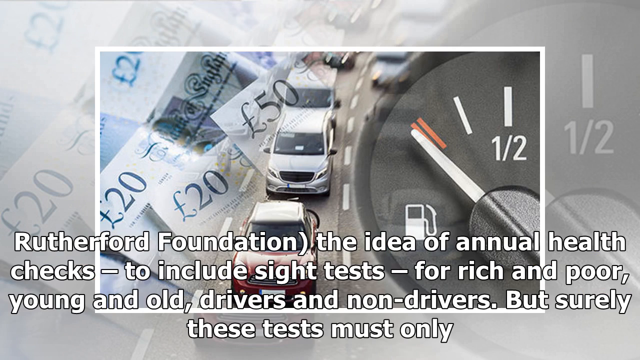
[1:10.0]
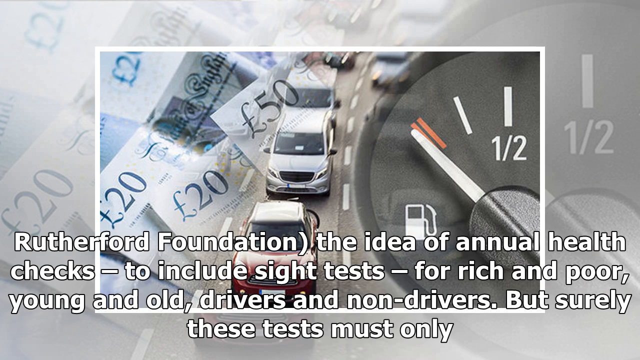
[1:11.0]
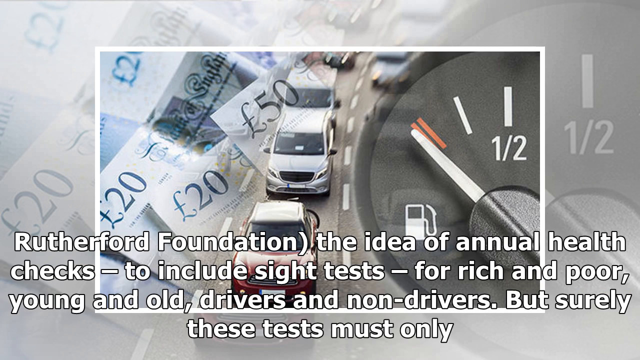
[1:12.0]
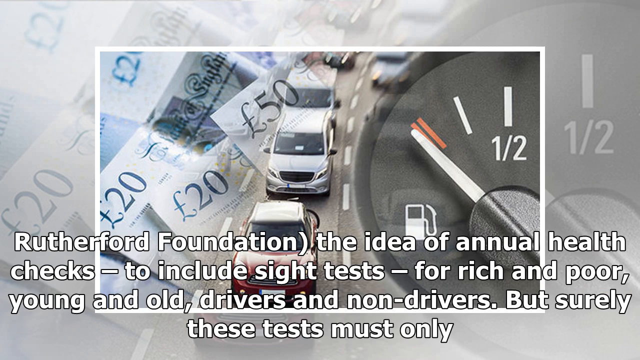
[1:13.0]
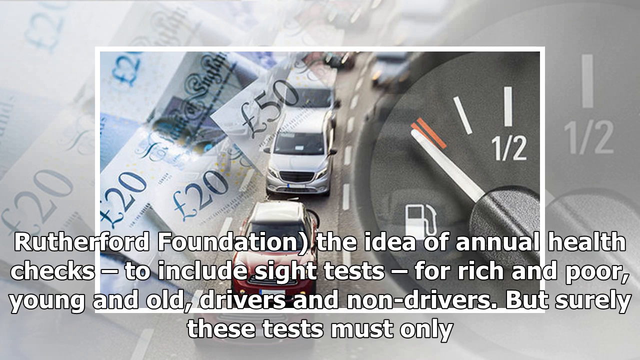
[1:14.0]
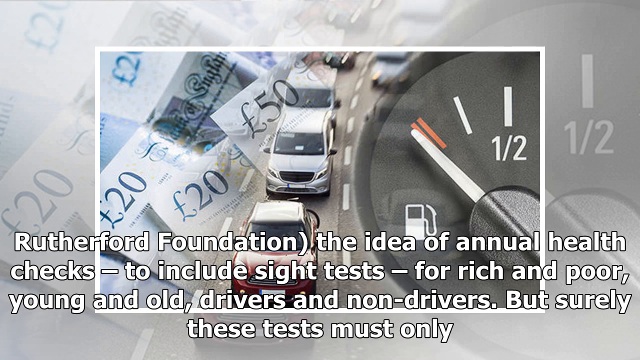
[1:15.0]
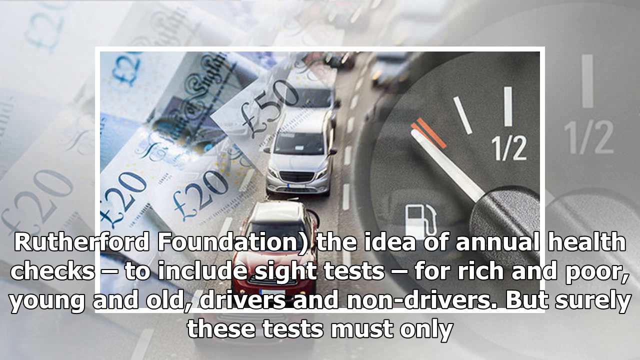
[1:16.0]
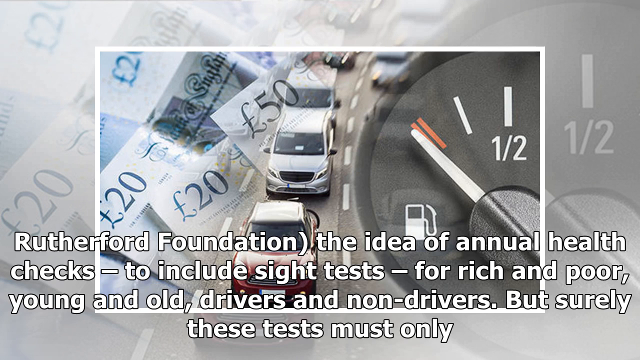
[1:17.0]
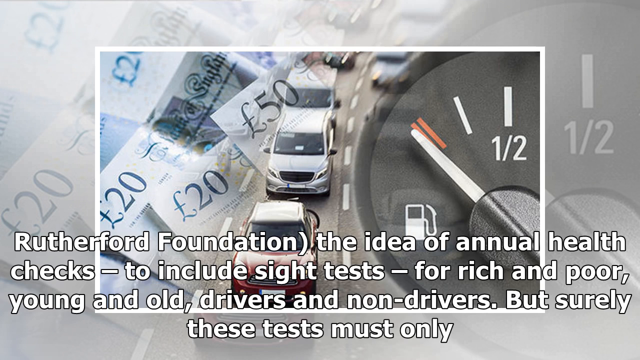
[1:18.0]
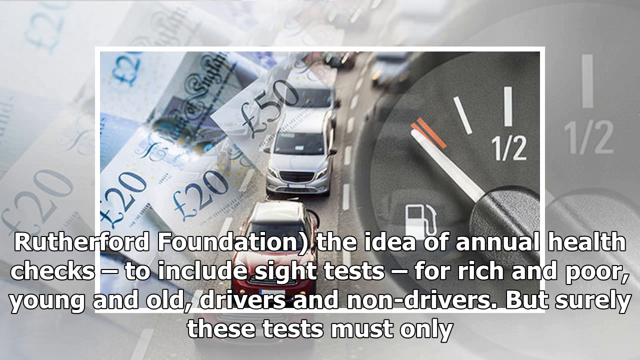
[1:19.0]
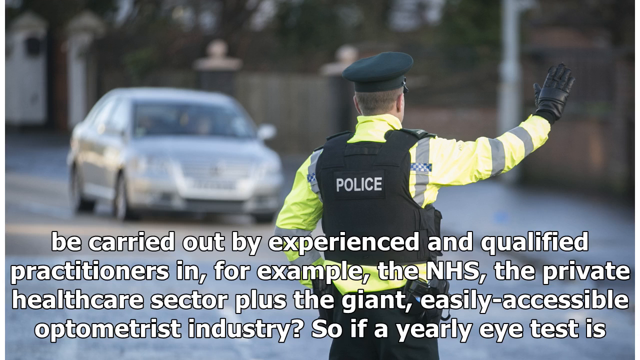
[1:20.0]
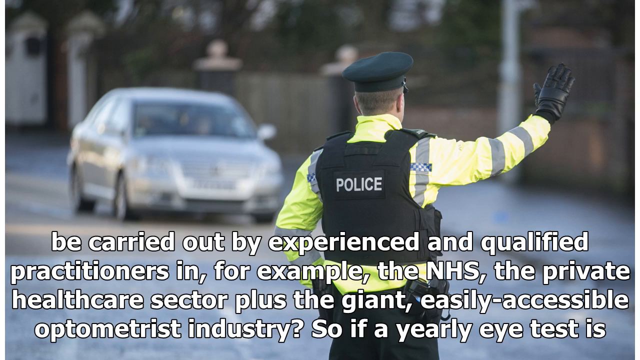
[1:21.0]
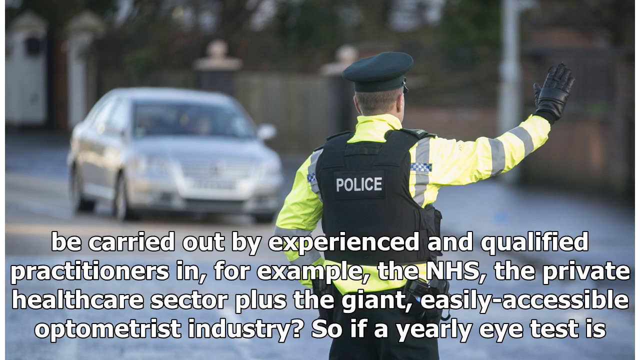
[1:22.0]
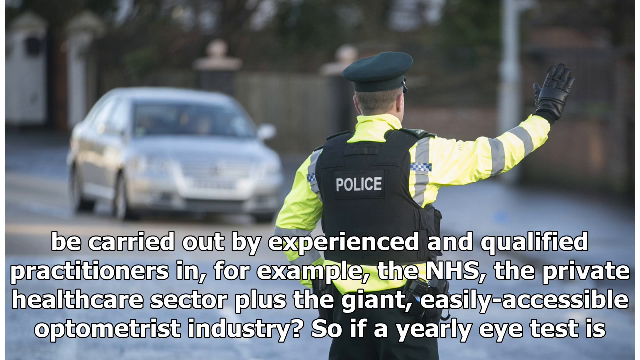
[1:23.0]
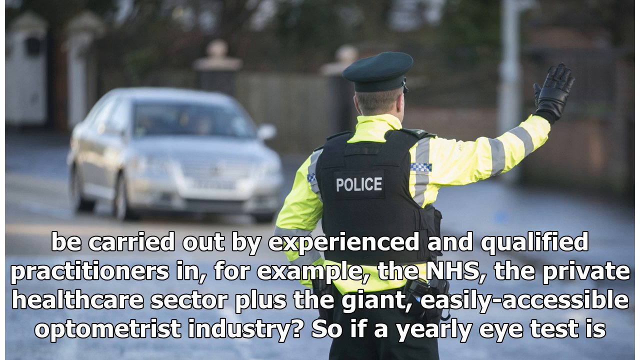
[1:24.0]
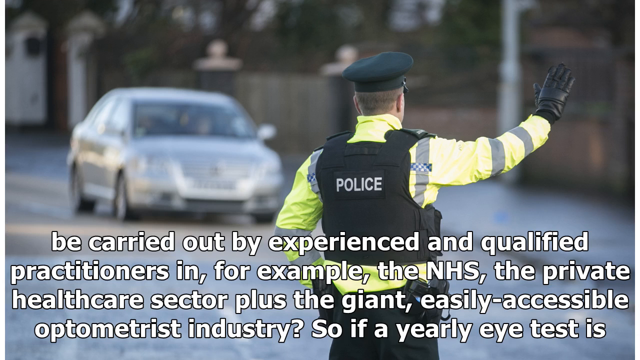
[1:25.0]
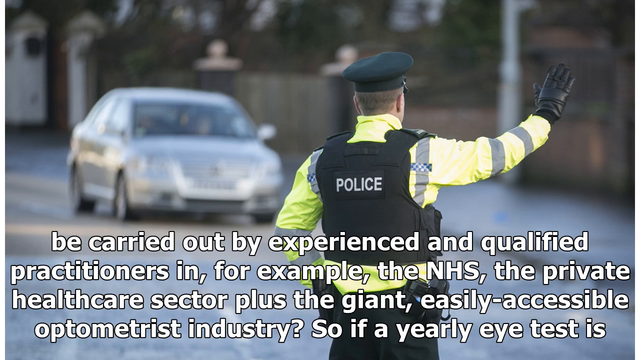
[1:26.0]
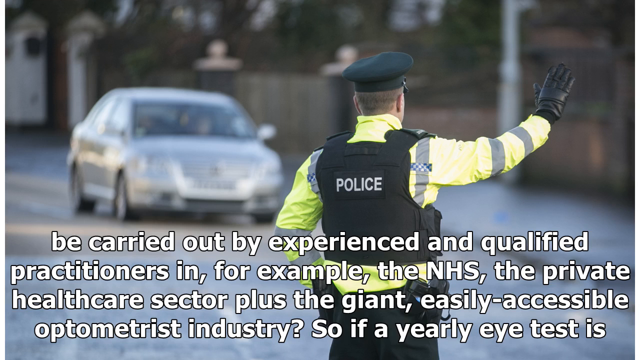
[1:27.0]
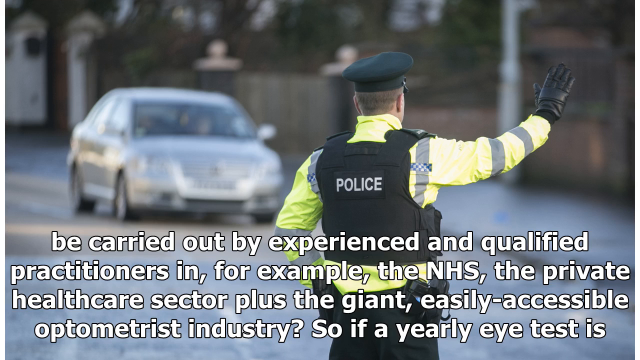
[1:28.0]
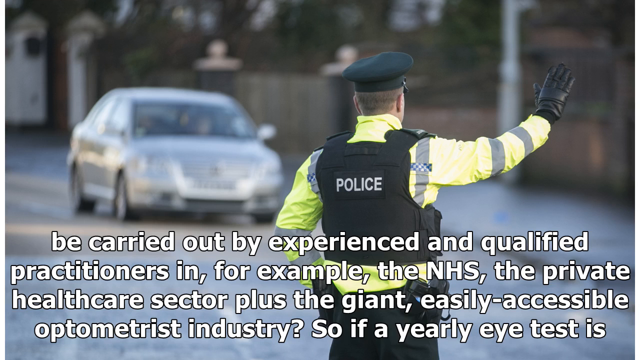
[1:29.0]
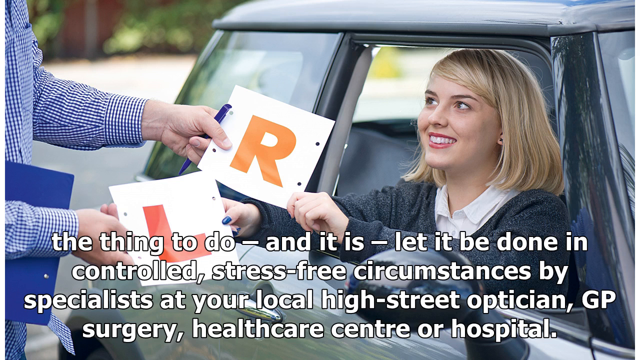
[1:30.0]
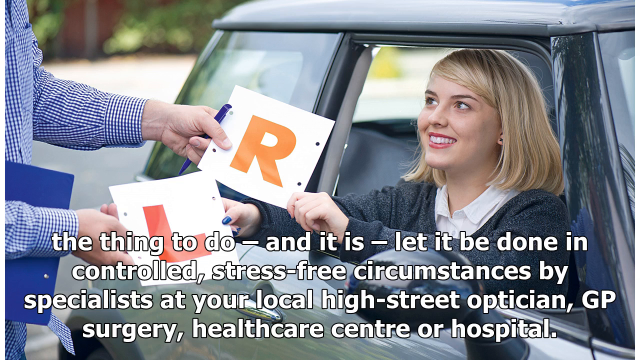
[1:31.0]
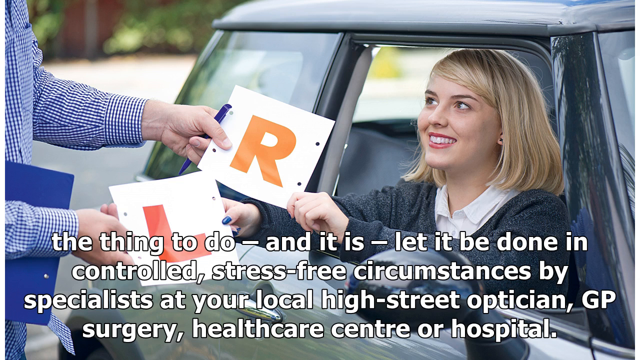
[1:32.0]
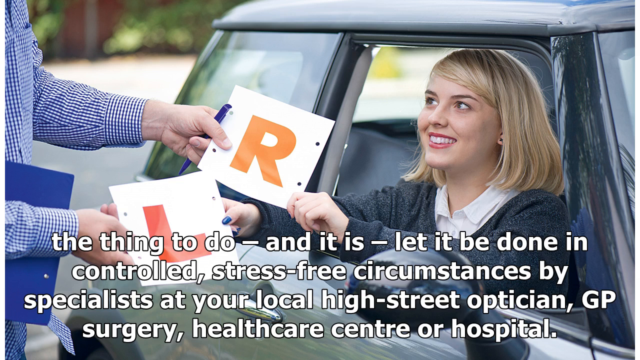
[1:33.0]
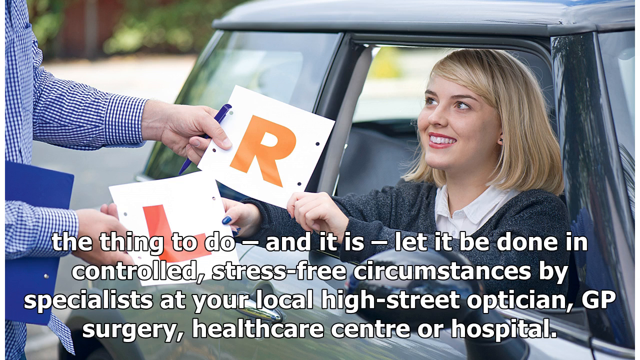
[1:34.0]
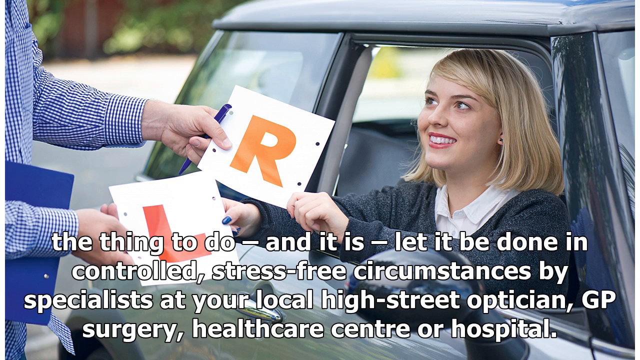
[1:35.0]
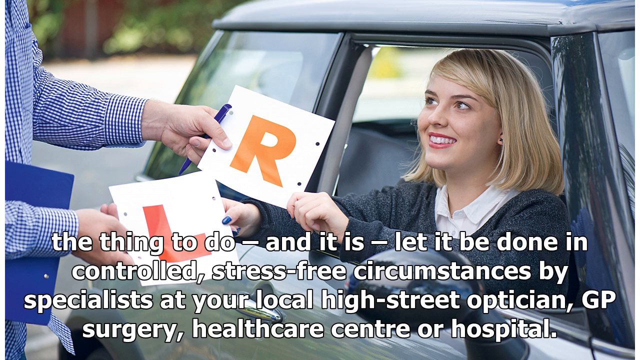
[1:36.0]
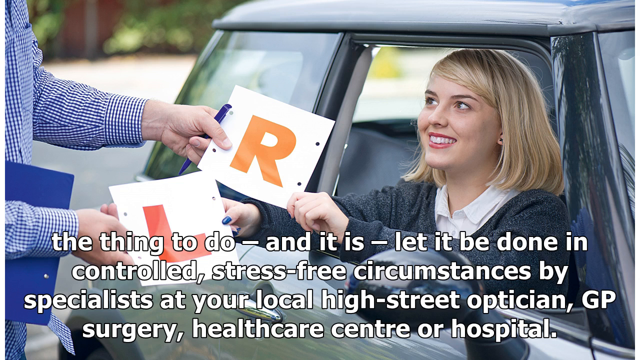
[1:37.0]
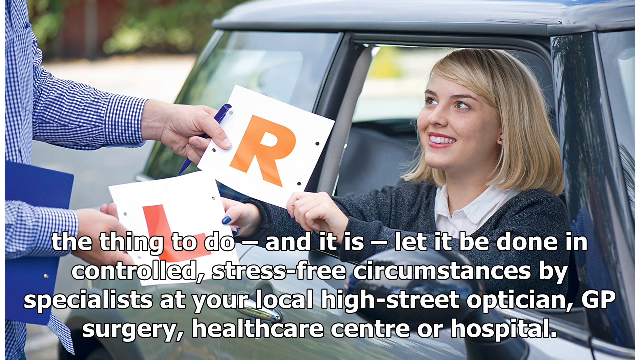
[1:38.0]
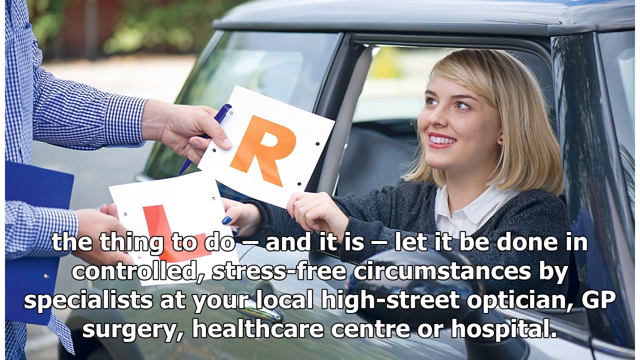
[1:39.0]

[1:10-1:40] Caption text reads "Rutherford Foundation, the idea of annual health checks to include sight tests for rich and poor, young and old, drivers and non-drivers, but surely." A gas gauge showing how much gas is in the tank appears, and the text continues "be carried out by experienced and qualified practitioners, for example, the NHS, the private health care sector." A picture shows a woman holding an R and another person outside her car holding an L, with text about stress-free circumstances. Part of the background shows cars and vans moving down the road, and the background also has money in pounds: 20 pounds and 50 pounds.